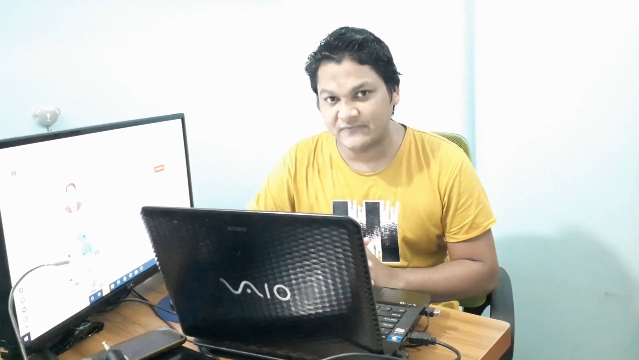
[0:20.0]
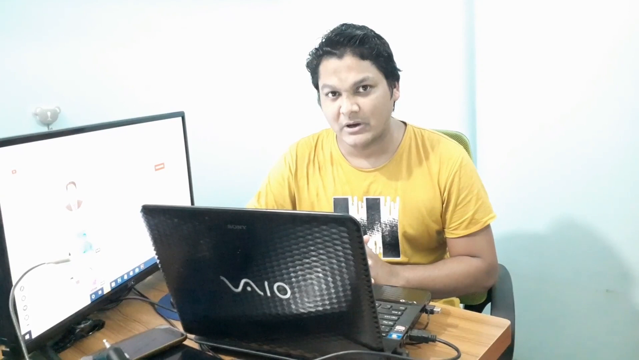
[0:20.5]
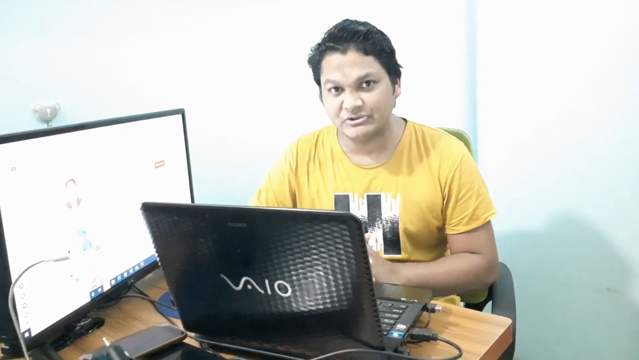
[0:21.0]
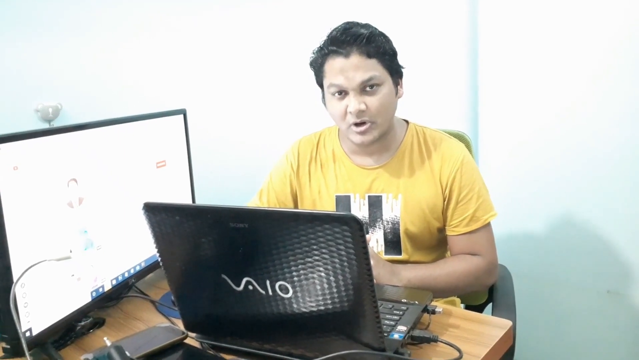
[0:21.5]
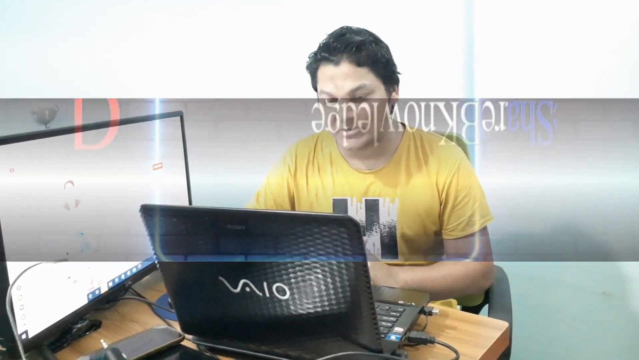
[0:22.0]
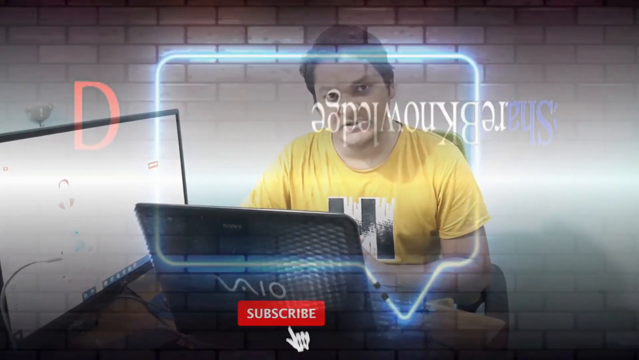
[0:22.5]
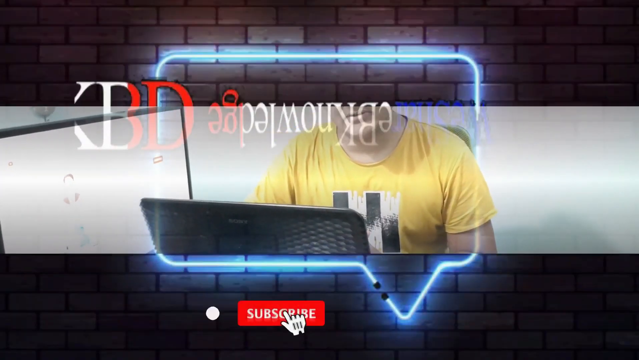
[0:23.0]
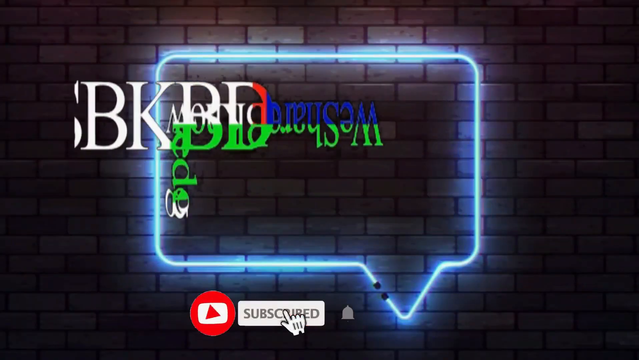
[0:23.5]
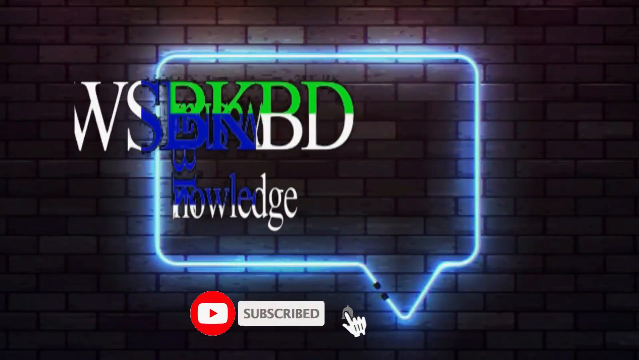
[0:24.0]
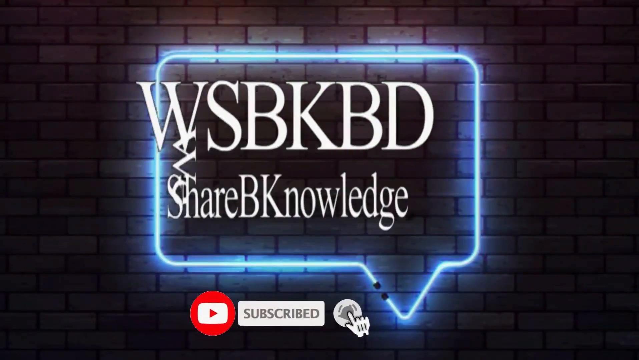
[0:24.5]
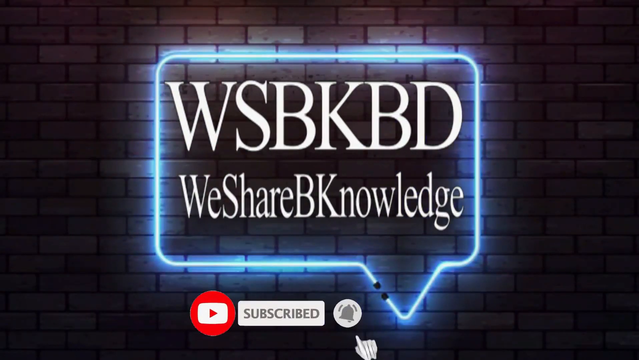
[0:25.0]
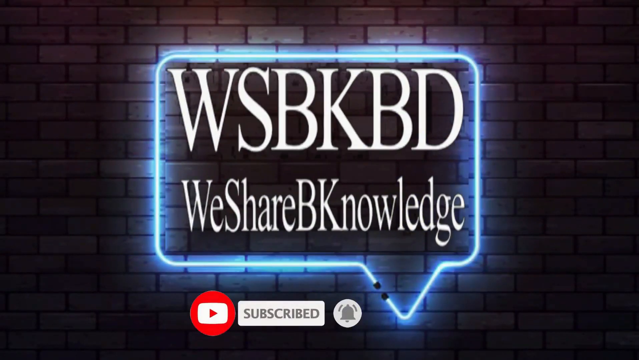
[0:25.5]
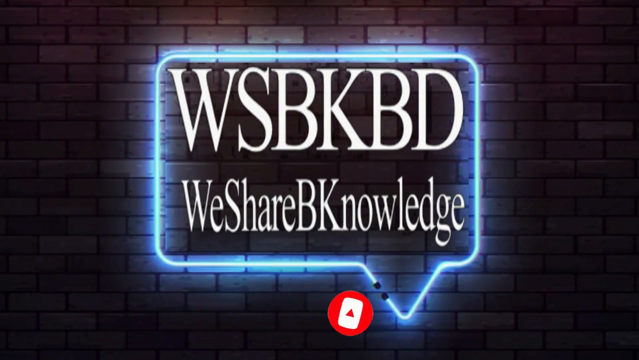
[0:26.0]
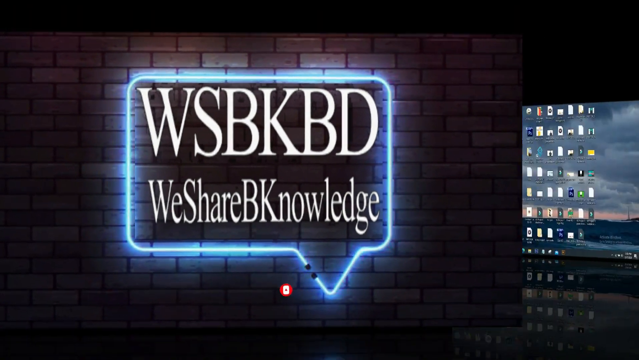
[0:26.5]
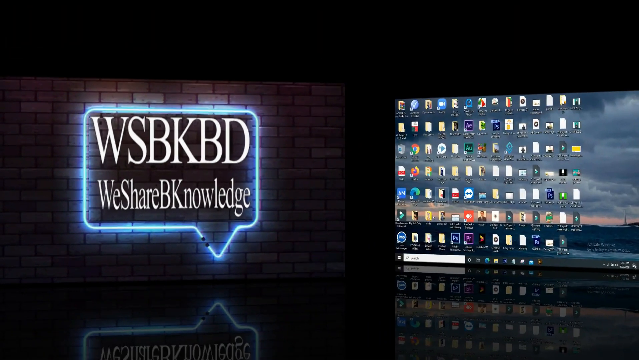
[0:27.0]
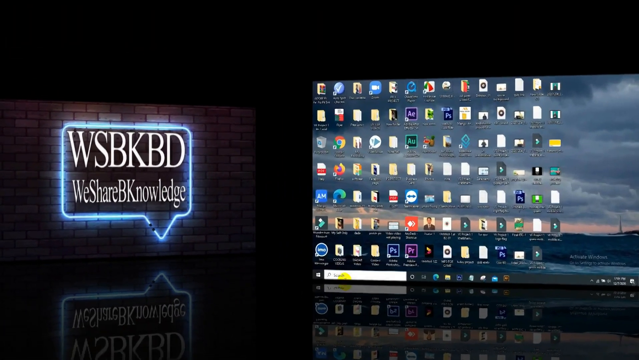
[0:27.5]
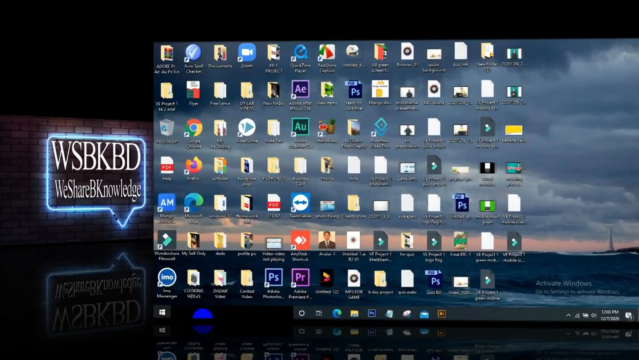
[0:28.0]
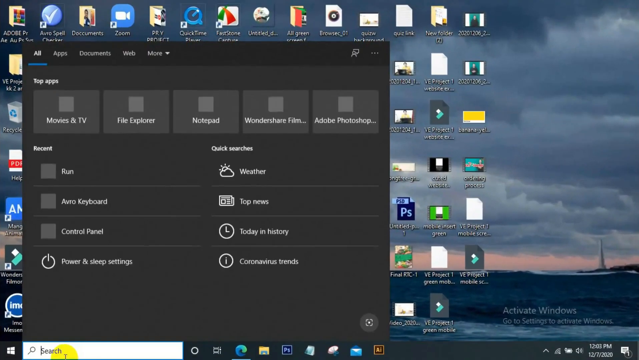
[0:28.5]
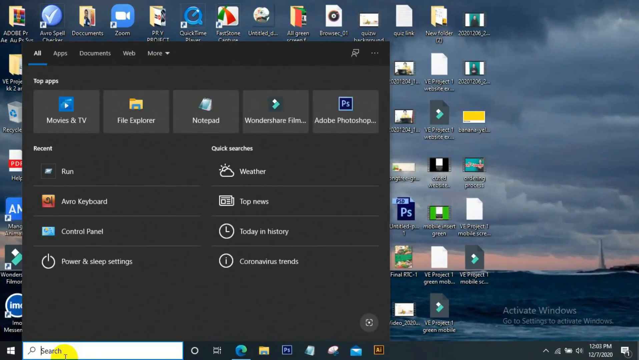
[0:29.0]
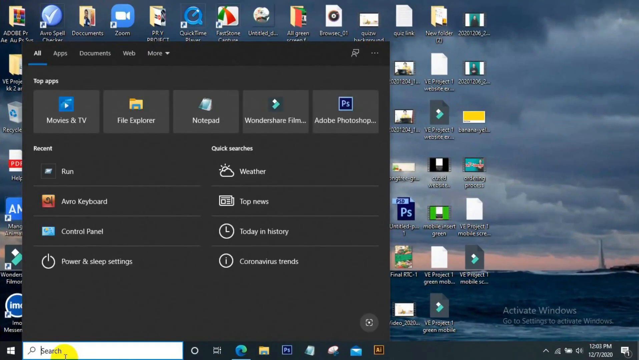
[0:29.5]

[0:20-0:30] The man in yellow continues to speak as an animation expands from the middle of the screen and separates to reveal a gray brick background with red, white, and blue letters. The letters change color from blue to green to white and read "WSBKBD," with "We Share BKnowledge" beneath, and a YouTube subscribe icon below that. The YouTube icon slides to the right and disappears, and the gray brick wall with the white text shrinks and moves to the left, revealing a desktop monitor on the right. The desktop moves to take up the whole screen, showing an abundance of desktop icons over a cloudy-sky wallpaper. A gray pop-up box appears that seems to be the Start menu, with power and sleep settings and the other typical Windows Start menu options.